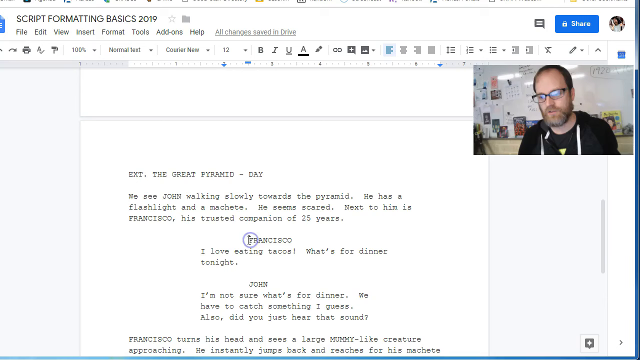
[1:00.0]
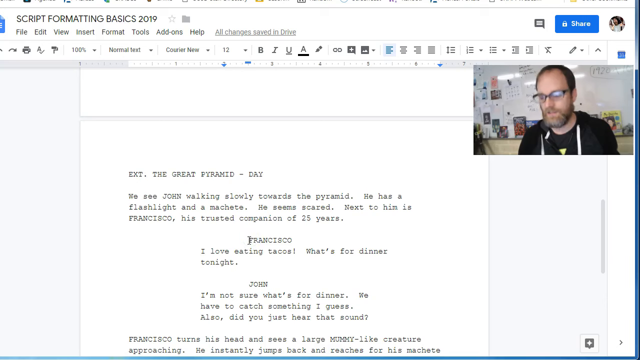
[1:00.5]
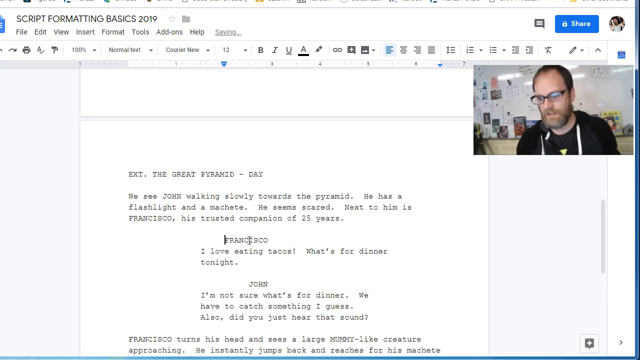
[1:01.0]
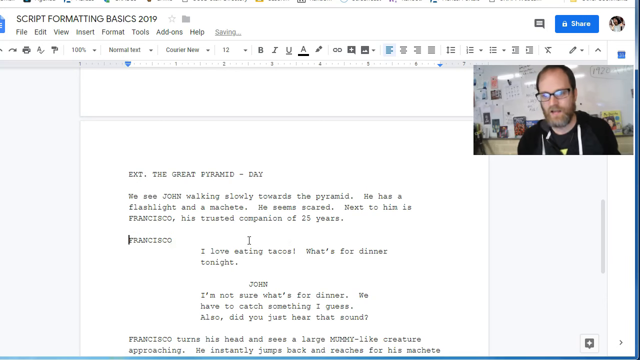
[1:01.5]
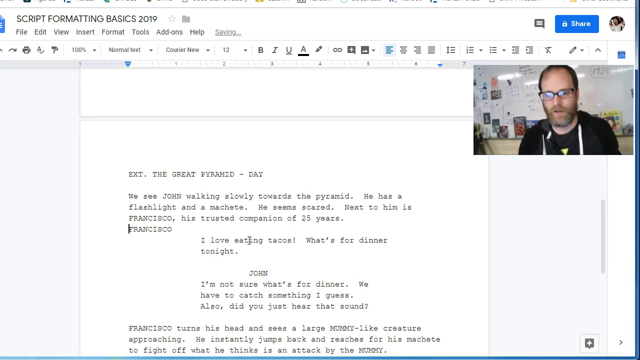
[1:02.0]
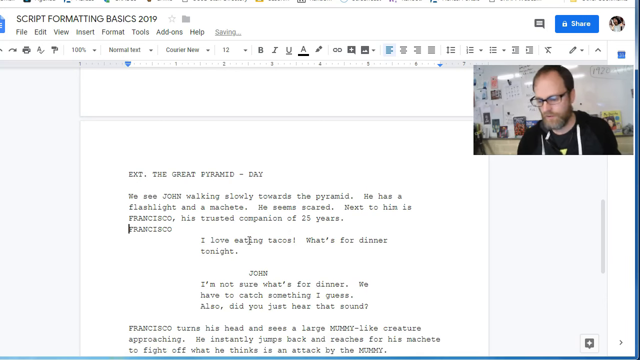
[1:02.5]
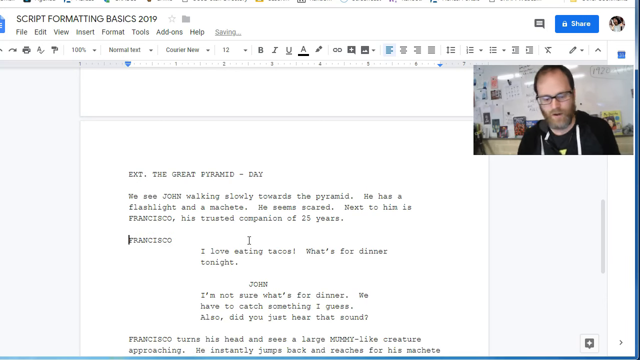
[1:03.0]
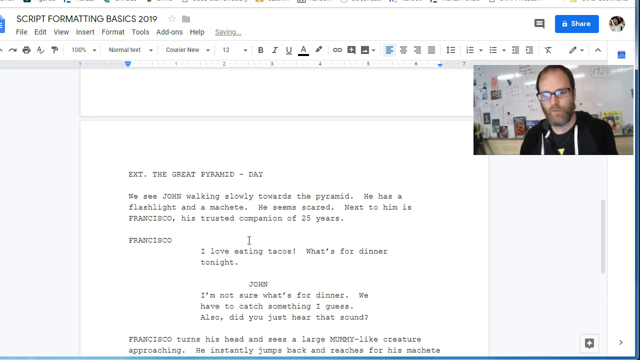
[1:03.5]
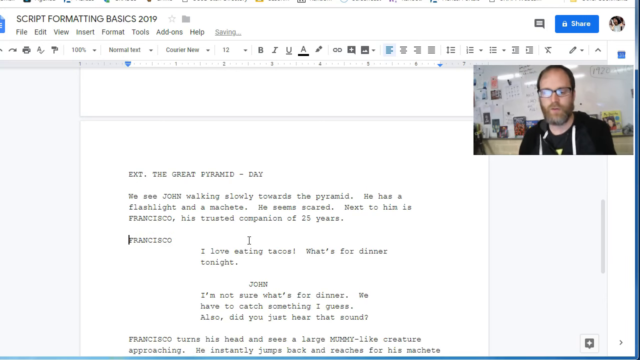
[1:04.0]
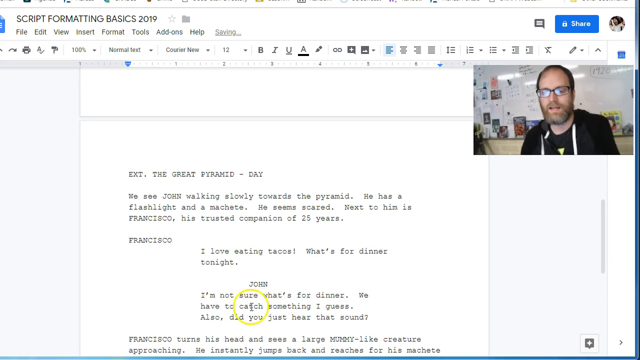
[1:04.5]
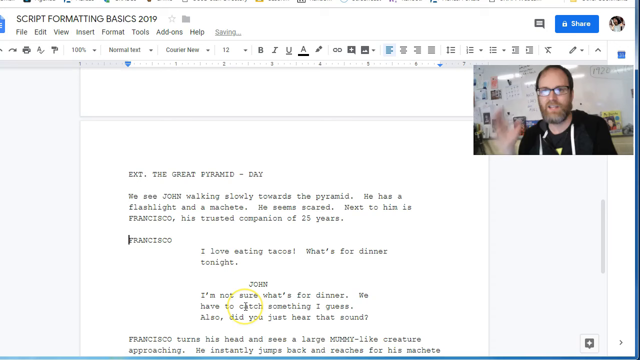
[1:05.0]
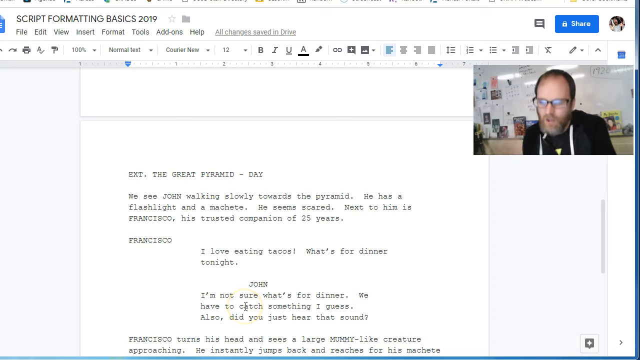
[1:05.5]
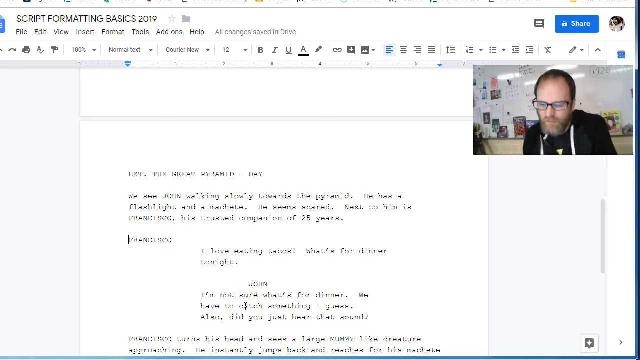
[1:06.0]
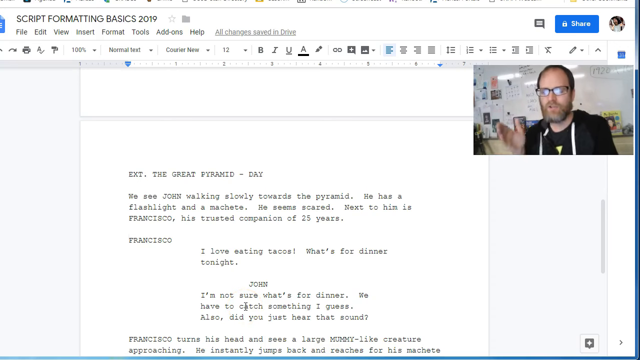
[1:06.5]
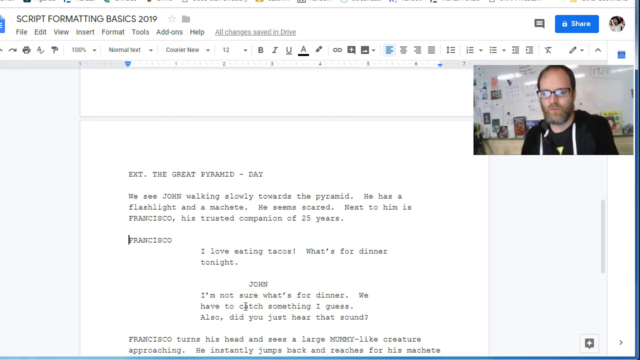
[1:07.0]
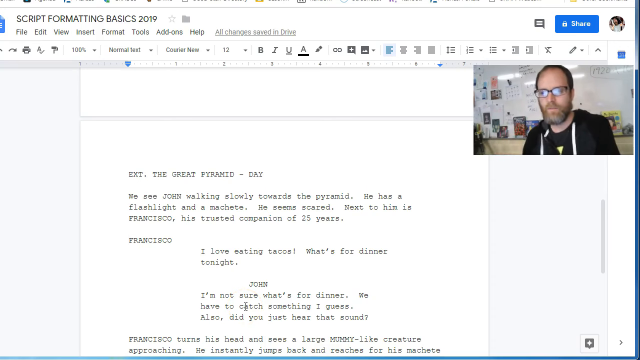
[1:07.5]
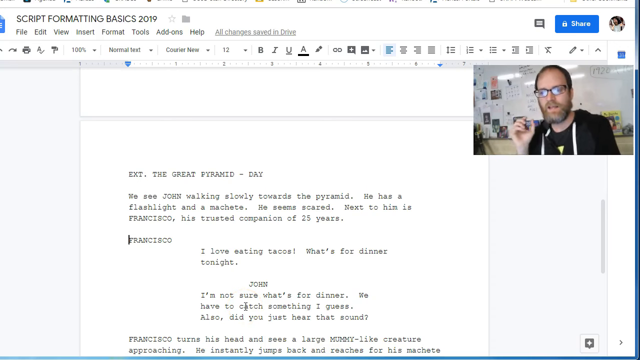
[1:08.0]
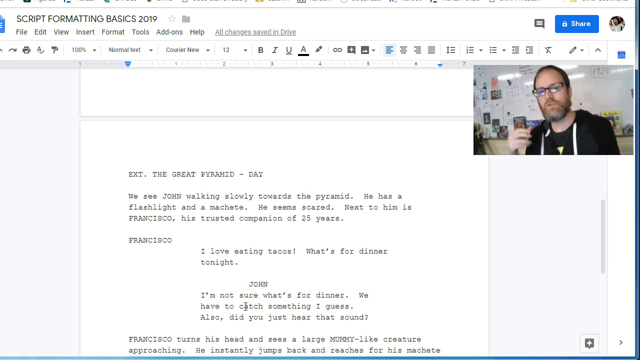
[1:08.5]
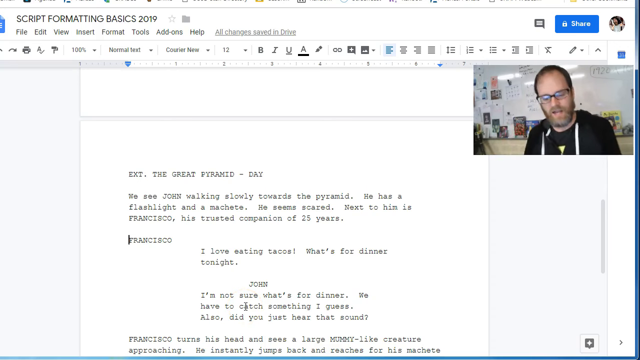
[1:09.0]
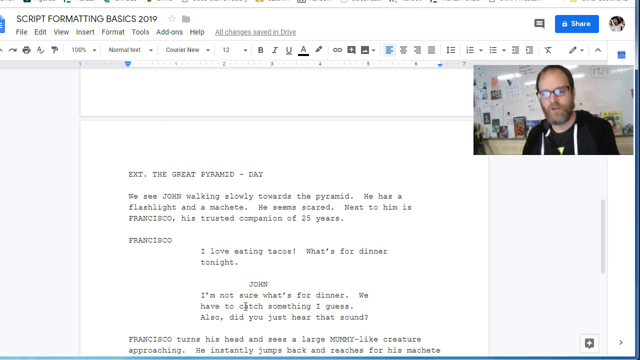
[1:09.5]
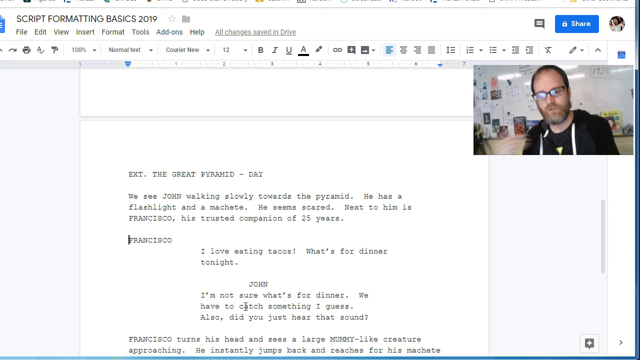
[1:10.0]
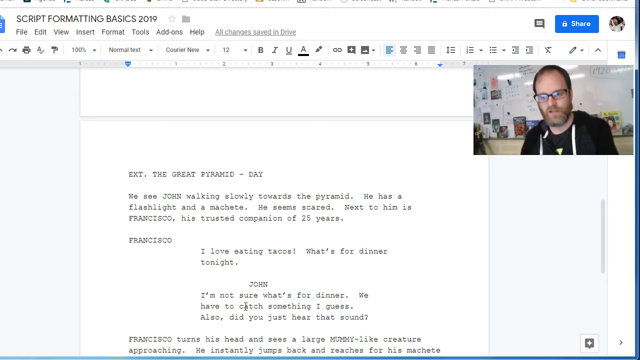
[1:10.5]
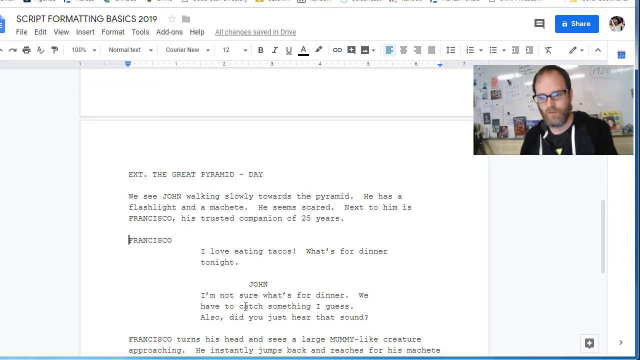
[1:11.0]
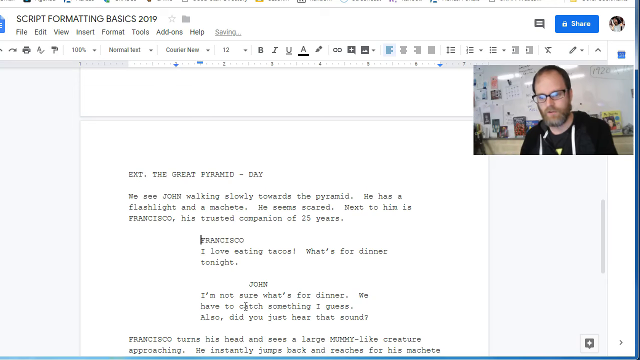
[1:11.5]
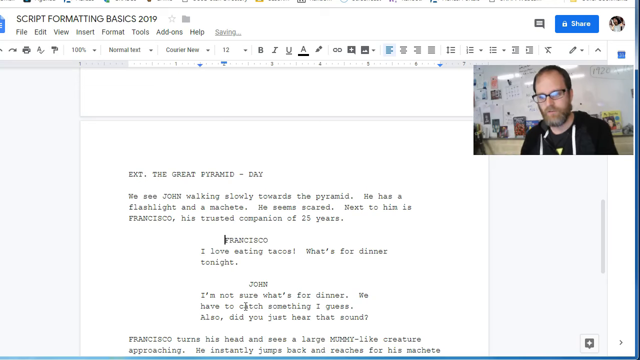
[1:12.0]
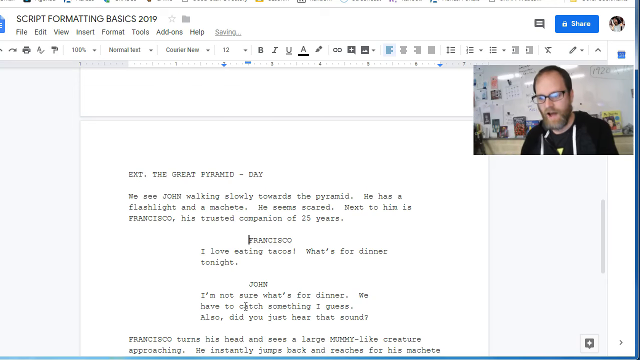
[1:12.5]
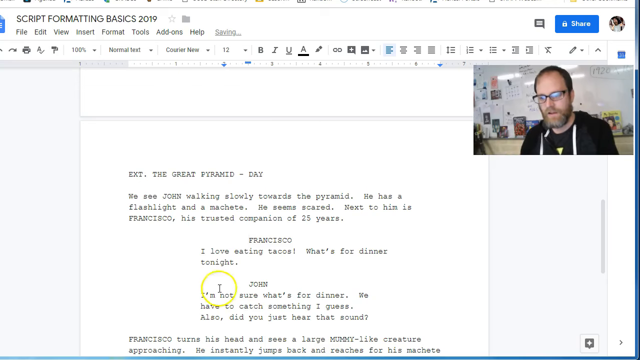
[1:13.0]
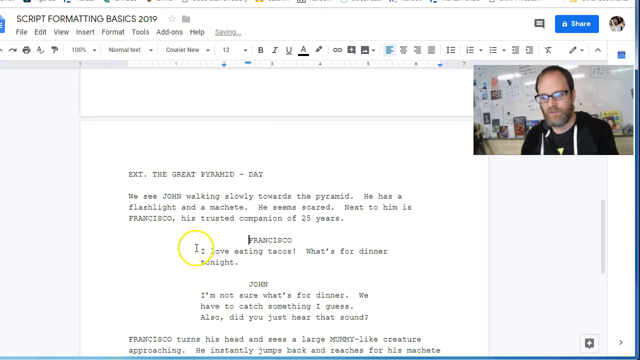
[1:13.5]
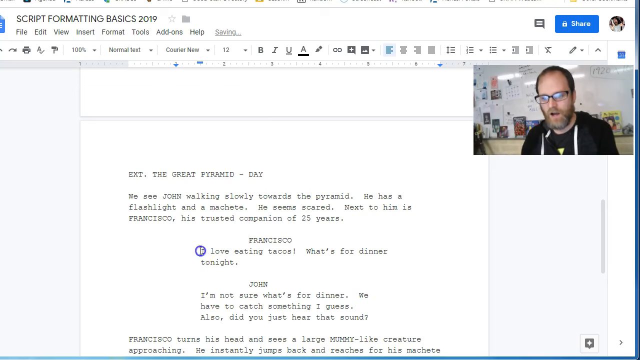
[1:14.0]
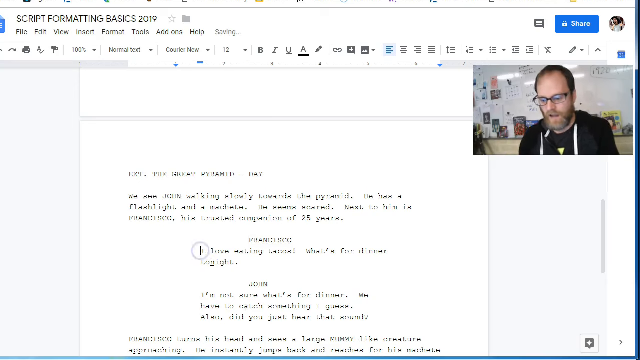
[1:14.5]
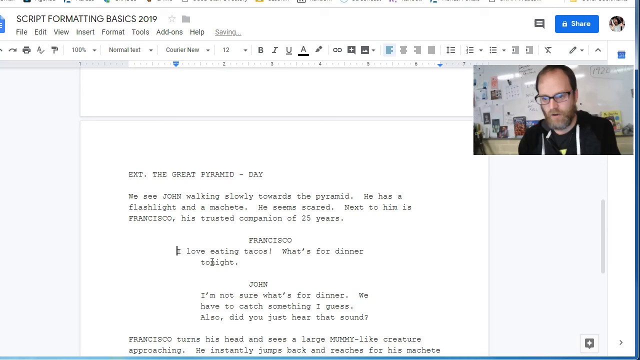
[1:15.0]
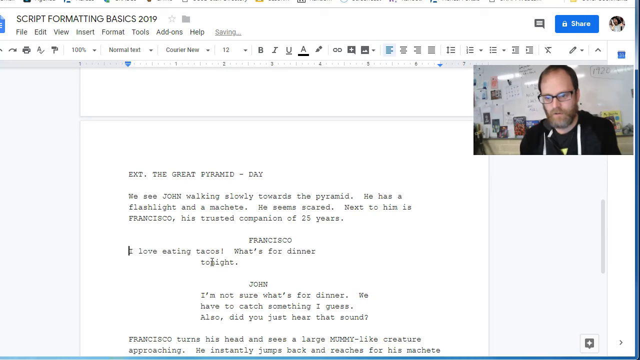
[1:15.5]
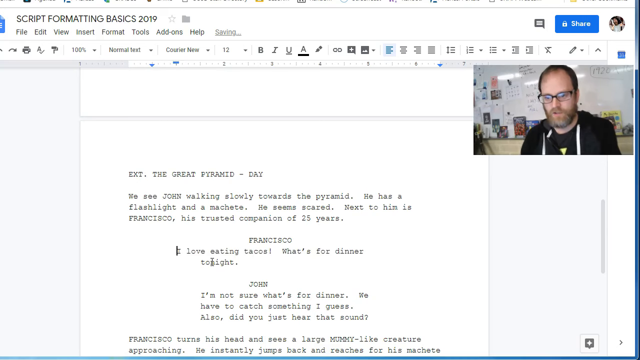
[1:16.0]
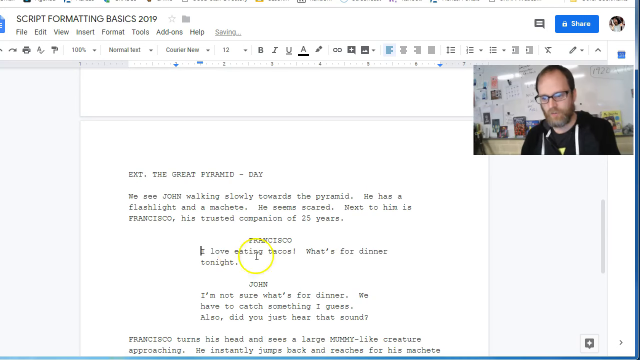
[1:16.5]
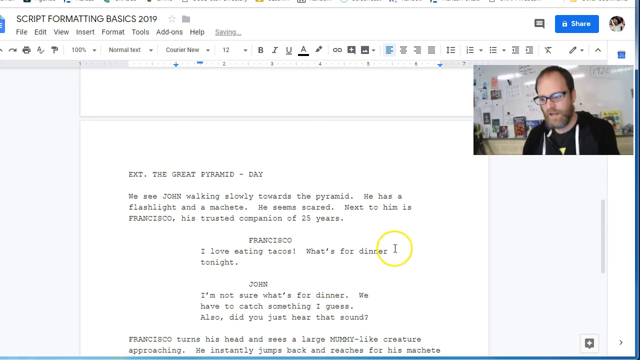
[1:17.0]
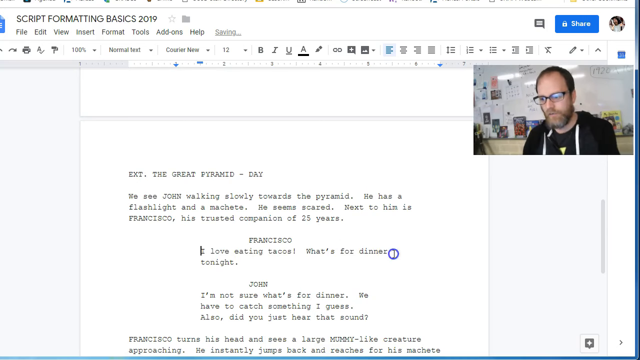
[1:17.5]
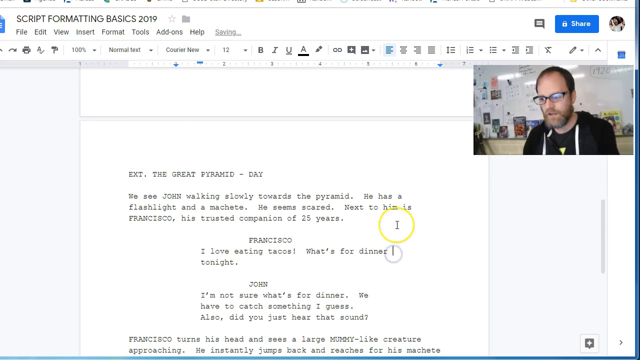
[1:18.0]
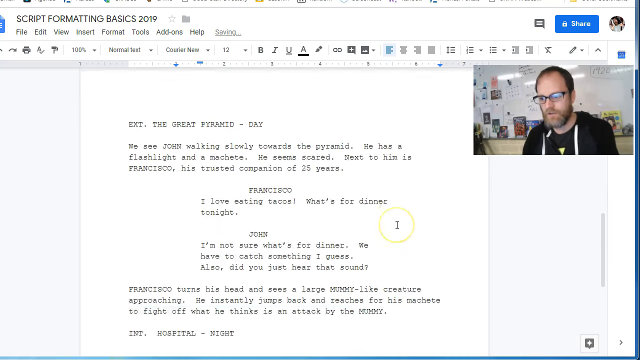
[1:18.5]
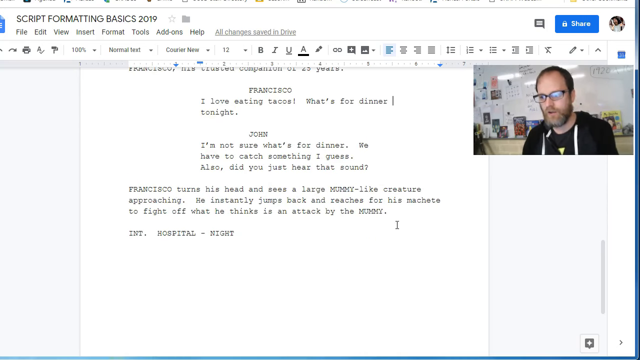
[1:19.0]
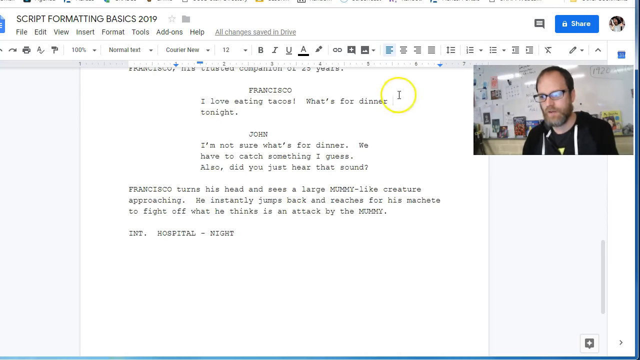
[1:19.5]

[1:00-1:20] He clicks right in front of the line with the cursor blinking and deletes some of the indentation, repeatedly, until the line is flush left with the block above. He deletes again, then returns it, leaving a space between the last line of the block and Francisco. A ruler runs above the document; one text block is indented at about one and a half, each indent being a half, so about three indents over, and it reads "I love eating tacos. What's for dinner tonight?" on two lines. He then indents a line a bunch further over, to about two and a half. A small blue marker shows where the indent is, along with the previous indent at about two, and there is a blue arrow pointing down. He manipulates the "I love eating" line, deleting until it is flush left, then puts it back where it was. He scrolls down further to what appears to be the end of the document, where the very last line reads "int. hospital-night".